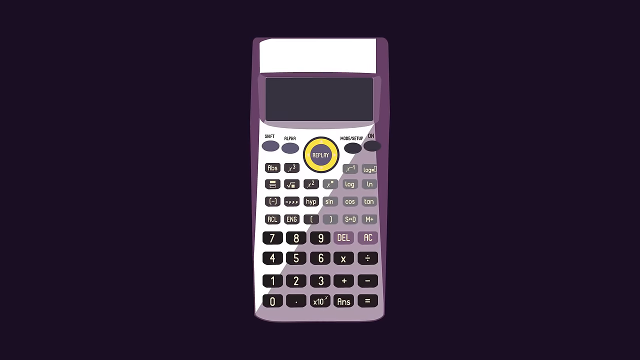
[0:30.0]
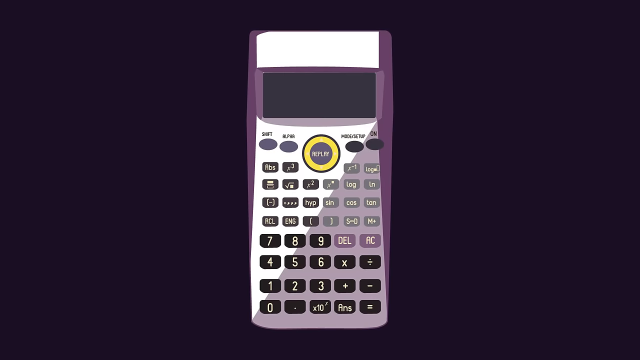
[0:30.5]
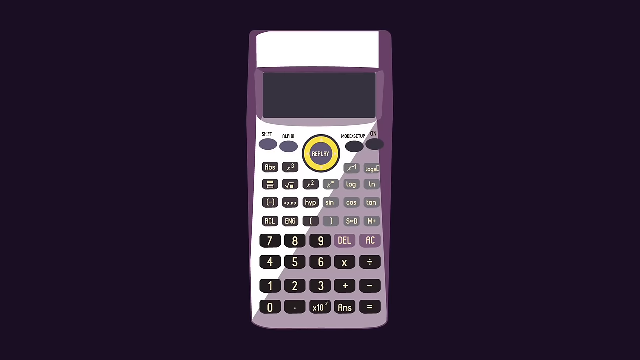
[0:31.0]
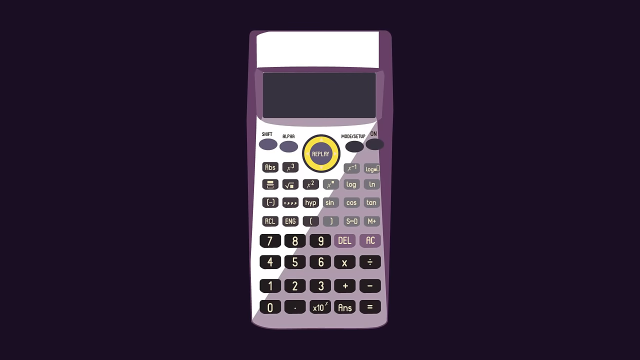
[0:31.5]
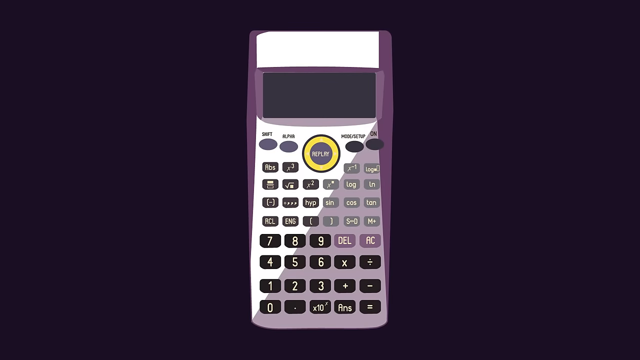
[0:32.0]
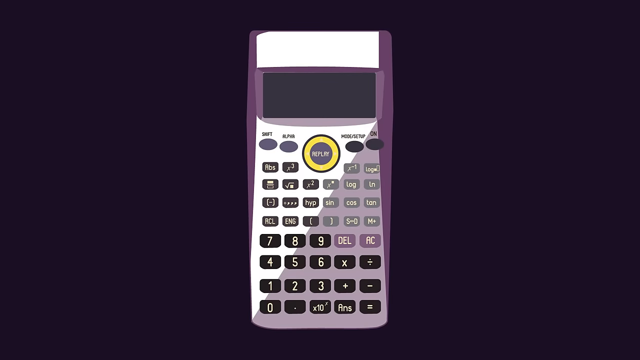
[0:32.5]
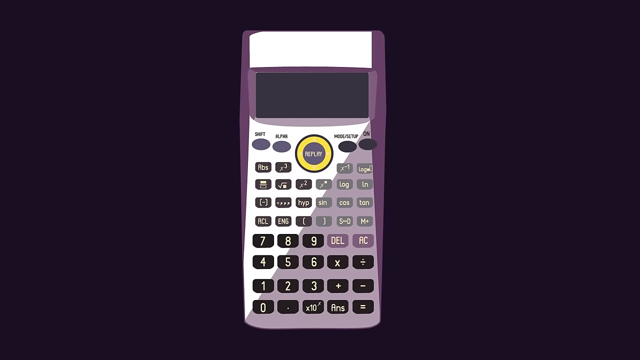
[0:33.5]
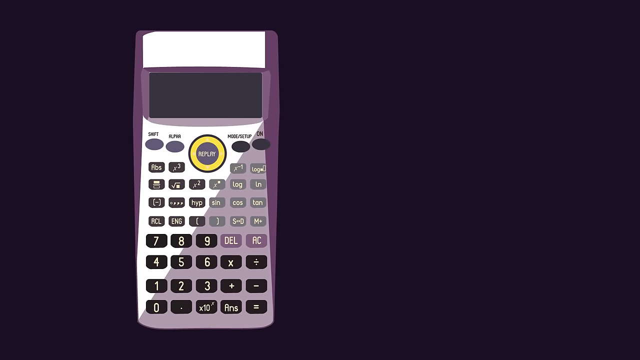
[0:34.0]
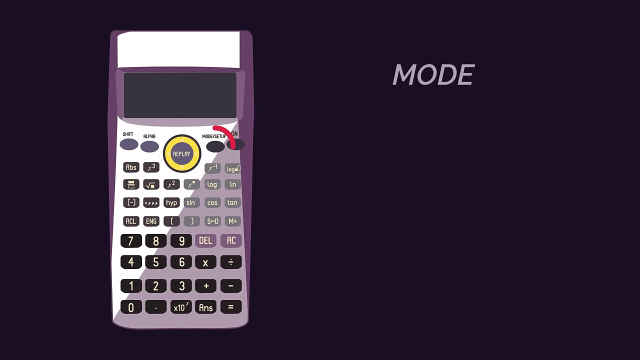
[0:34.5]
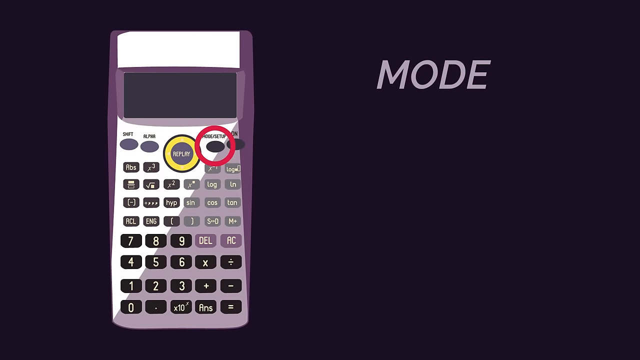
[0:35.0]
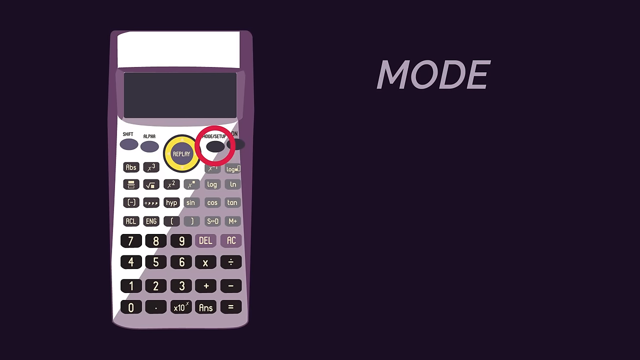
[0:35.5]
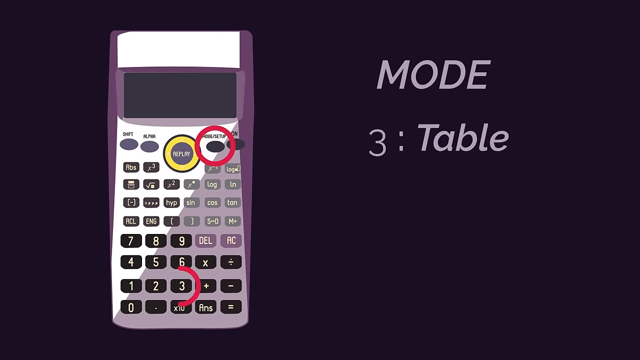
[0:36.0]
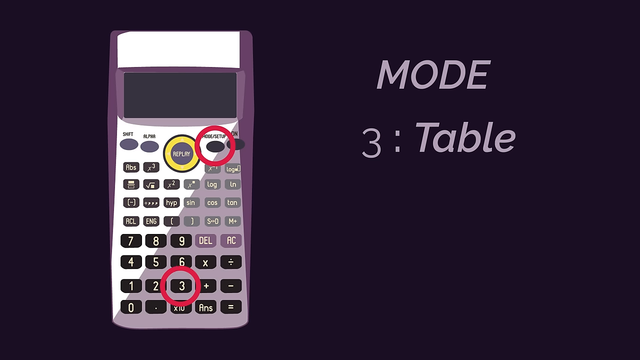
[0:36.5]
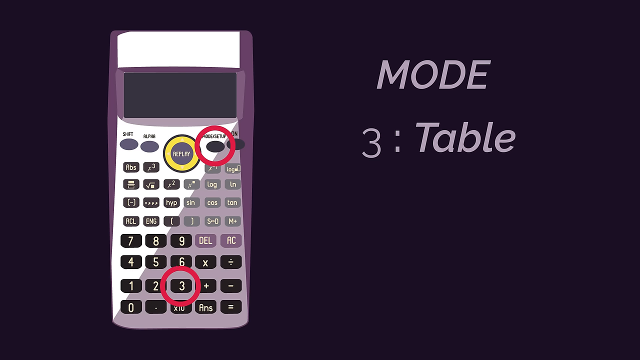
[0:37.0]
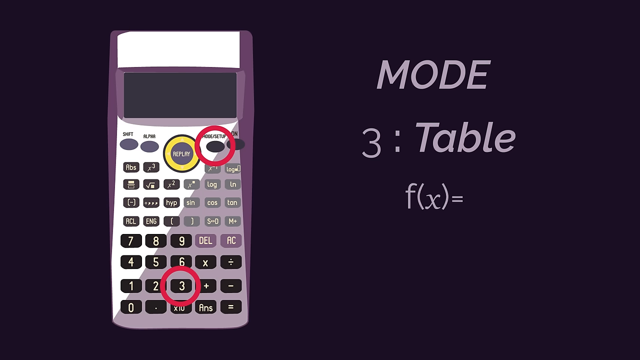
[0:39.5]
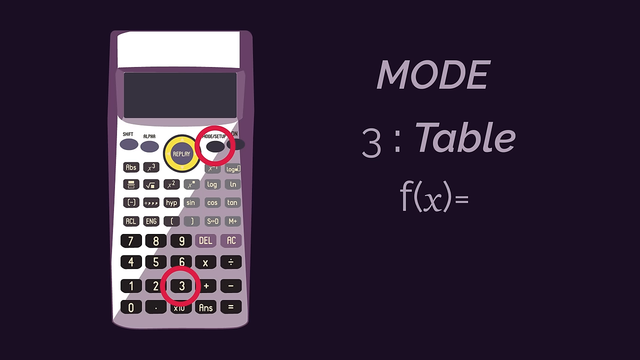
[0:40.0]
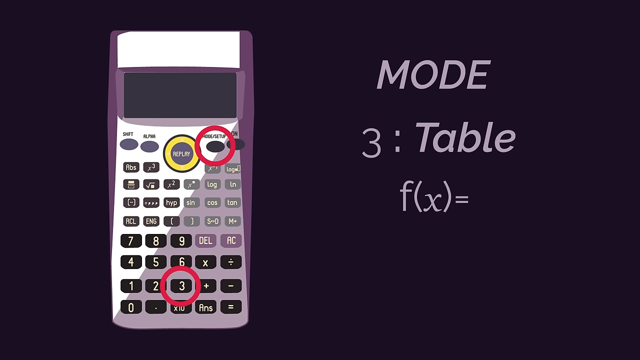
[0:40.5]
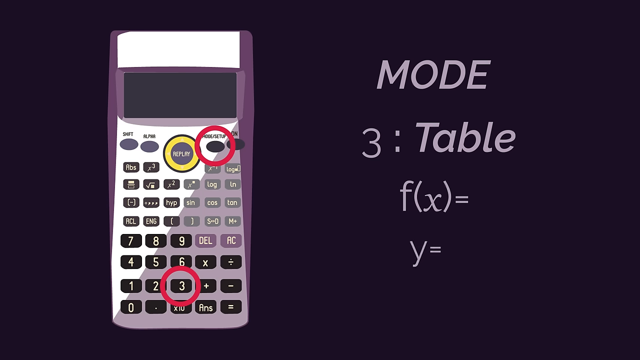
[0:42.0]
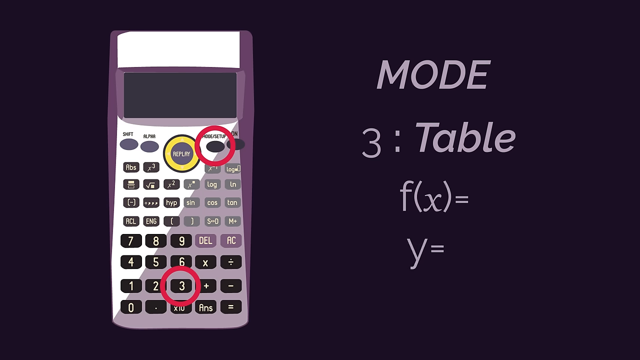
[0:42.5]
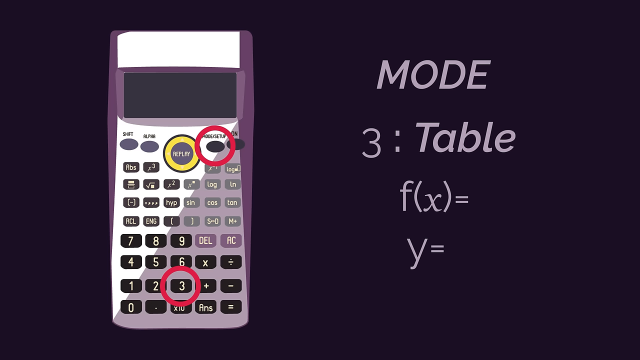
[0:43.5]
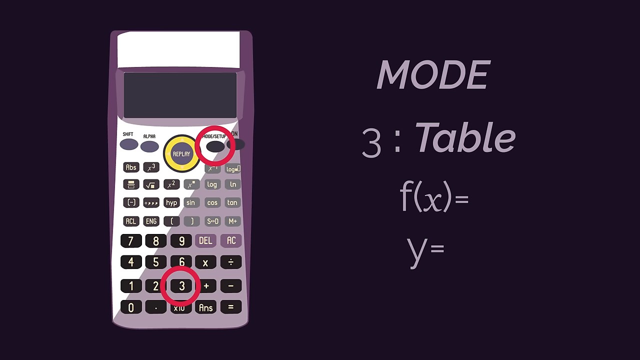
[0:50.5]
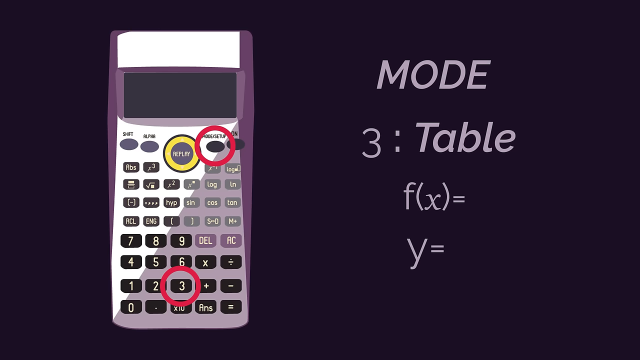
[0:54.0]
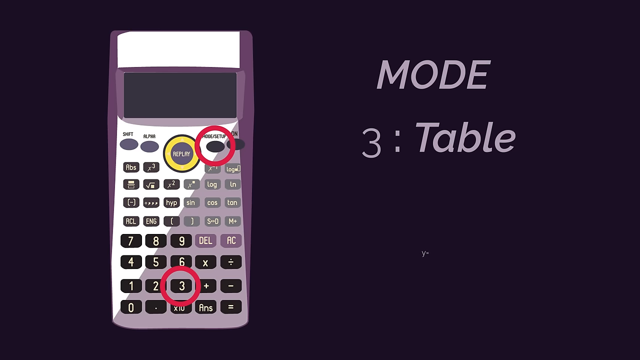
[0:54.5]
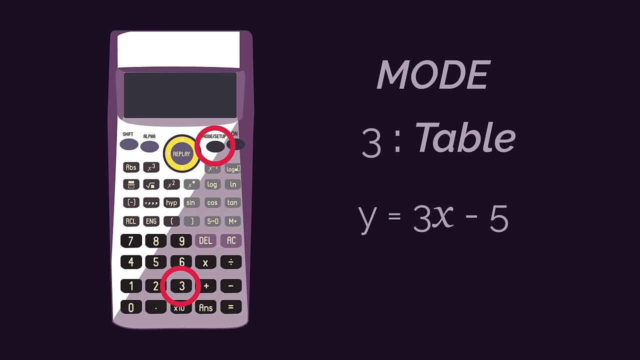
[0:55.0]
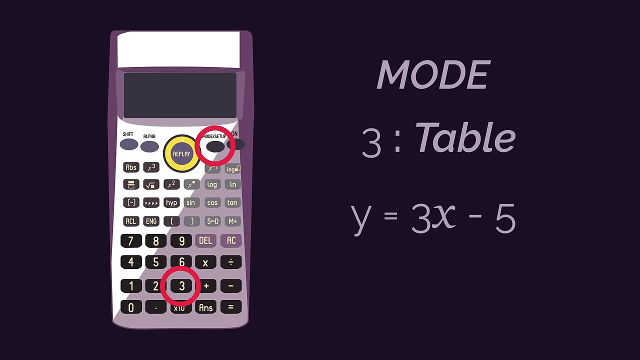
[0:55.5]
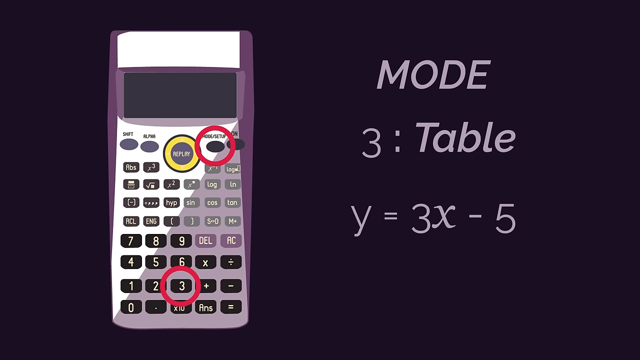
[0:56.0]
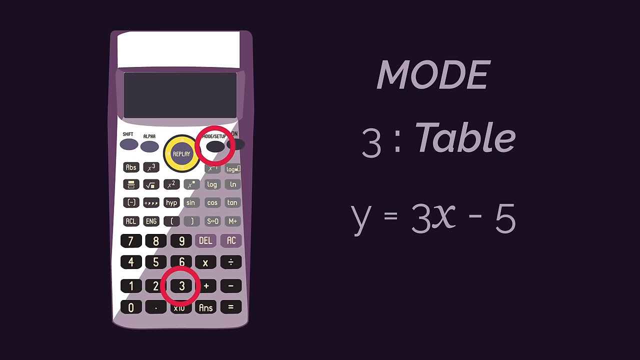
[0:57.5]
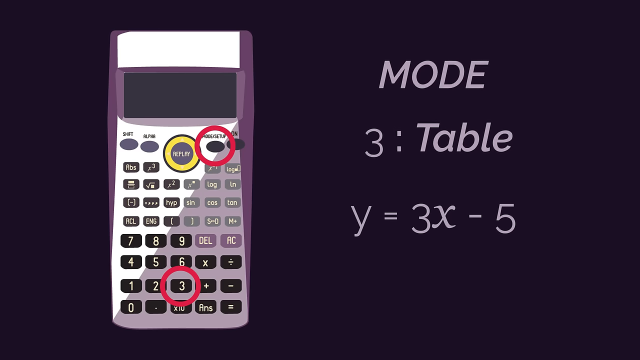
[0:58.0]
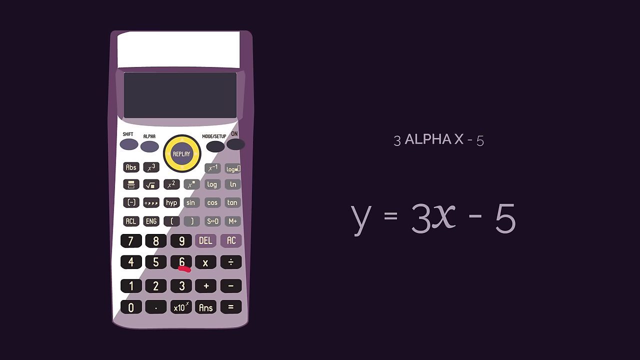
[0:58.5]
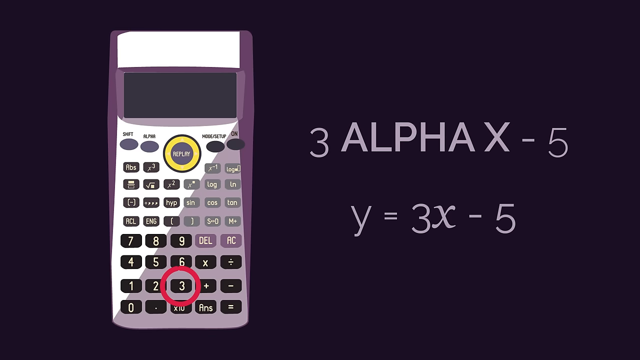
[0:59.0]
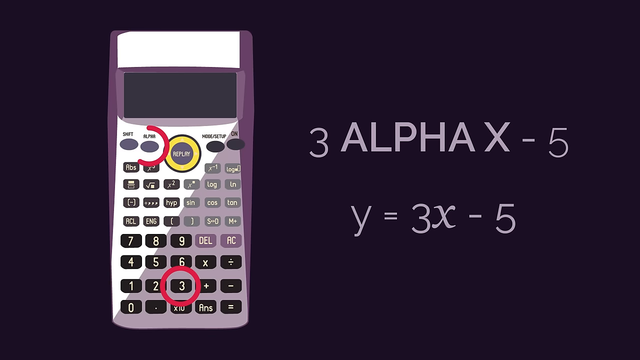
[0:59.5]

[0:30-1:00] An image of a purple calculator appears. It has a grey and silver front with black, purple, and grey buttons, and a white flat top right above its screen. The screen is not displaying any numbers. A REPLAY button is circled by a yellow circle. The calculator slides to the left, and the mode button is encircled in a red circle while a caption on the right says "mode." Next, the three button is circled in red, and the caption on the right says "three, table." The functions "f(x) =" and then "y=" appear and then disappear. The equation "y = 3x - 5" is shown, followed by text that says "3 ALPHA X - 5," and the ALPHA button on the calculator is circled in red.